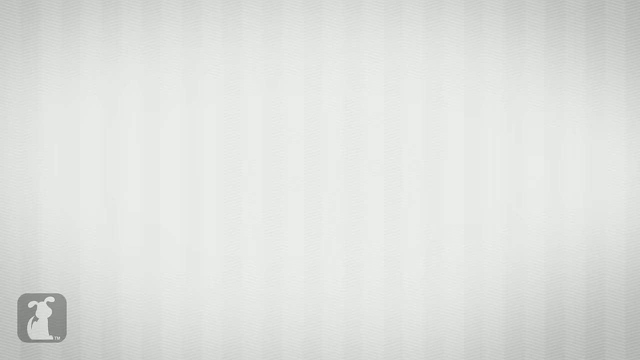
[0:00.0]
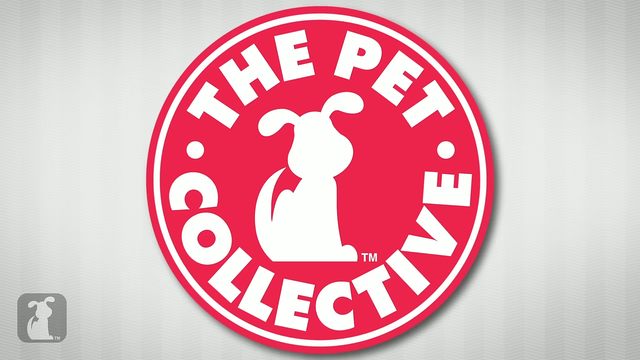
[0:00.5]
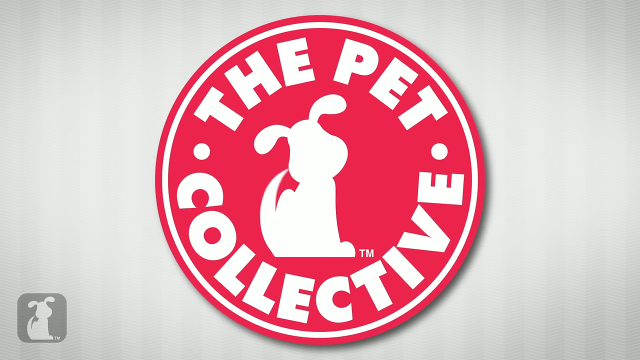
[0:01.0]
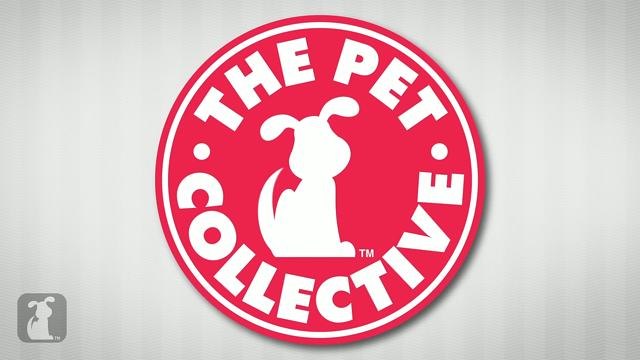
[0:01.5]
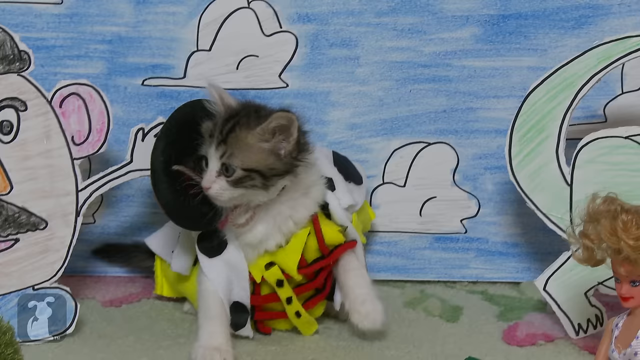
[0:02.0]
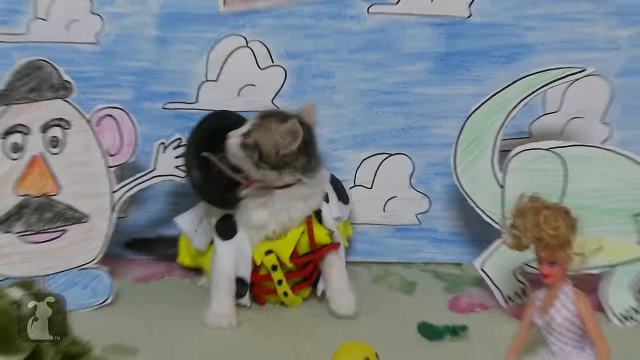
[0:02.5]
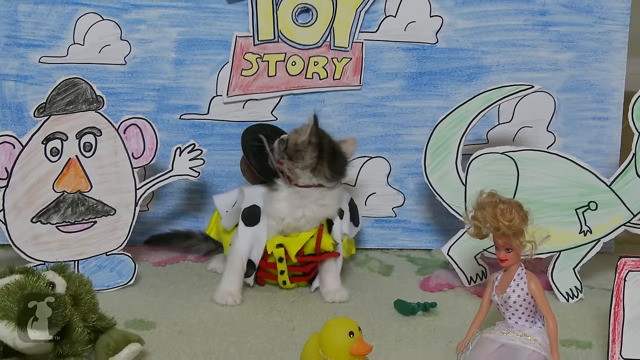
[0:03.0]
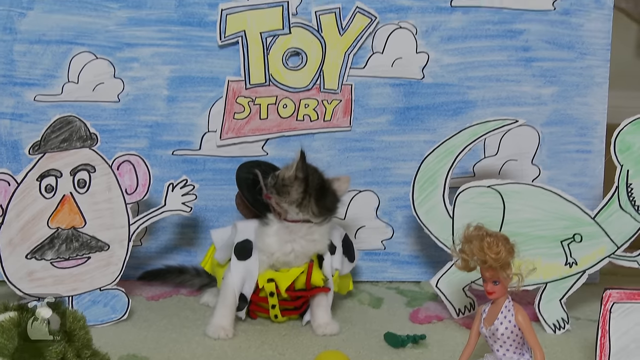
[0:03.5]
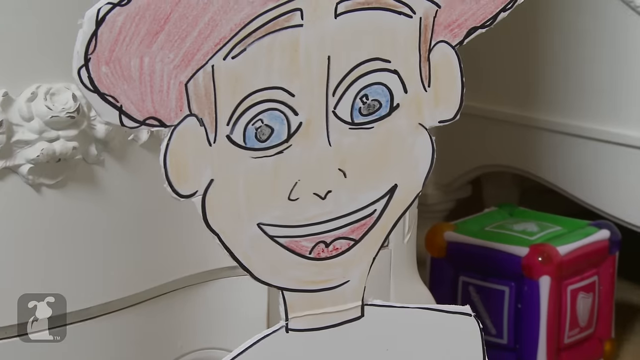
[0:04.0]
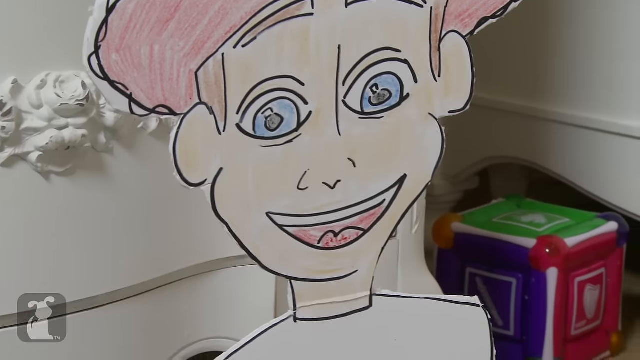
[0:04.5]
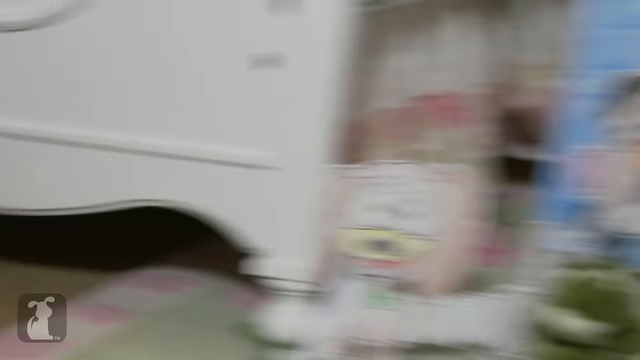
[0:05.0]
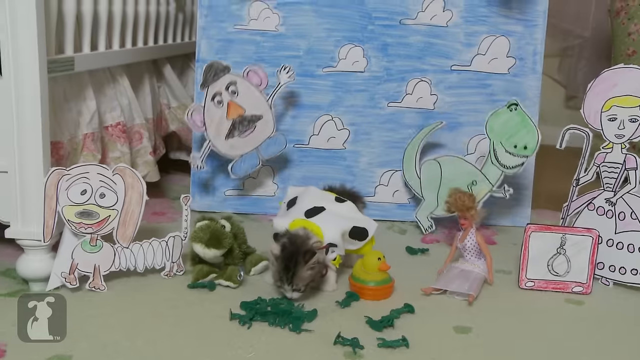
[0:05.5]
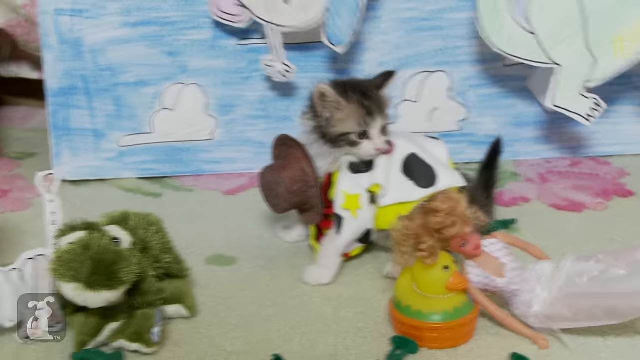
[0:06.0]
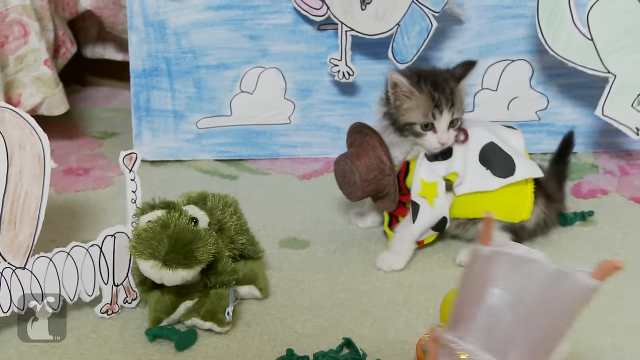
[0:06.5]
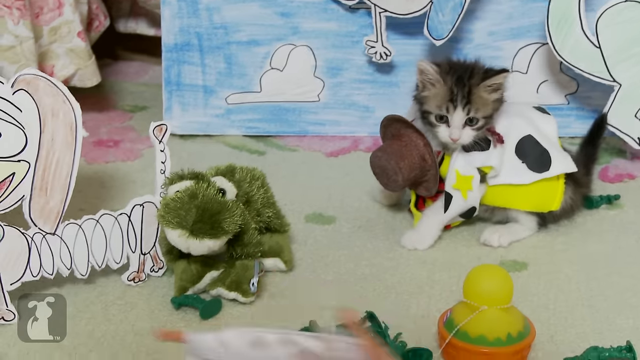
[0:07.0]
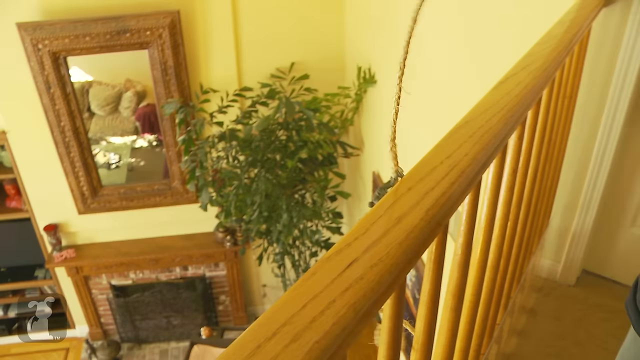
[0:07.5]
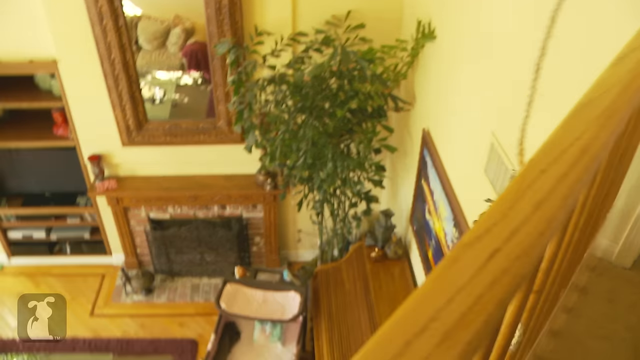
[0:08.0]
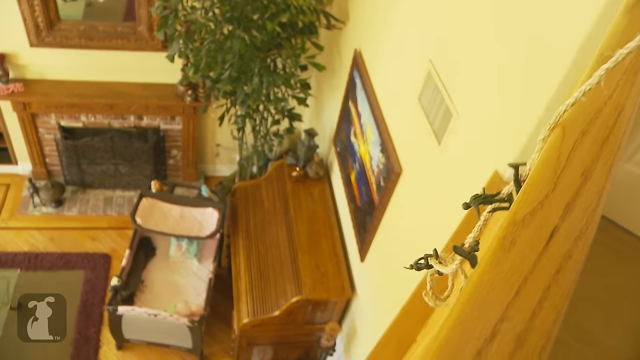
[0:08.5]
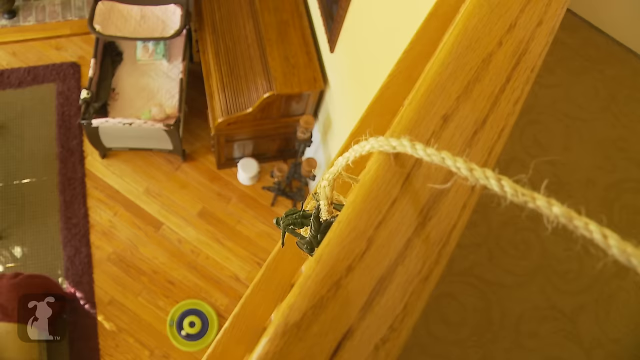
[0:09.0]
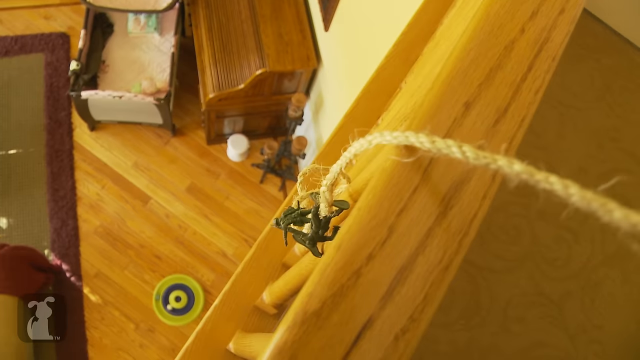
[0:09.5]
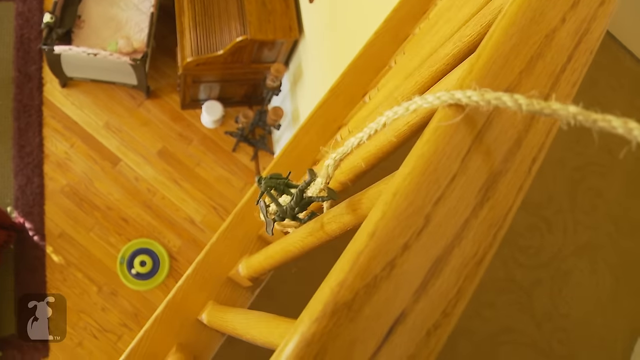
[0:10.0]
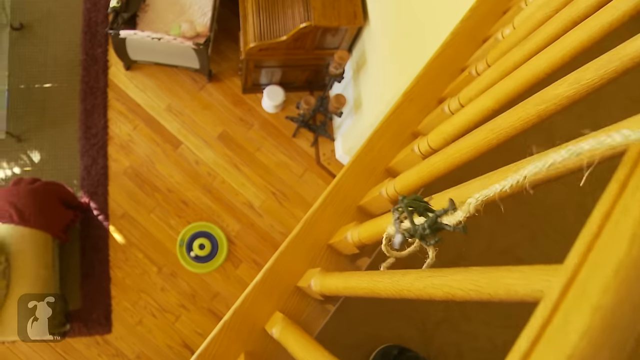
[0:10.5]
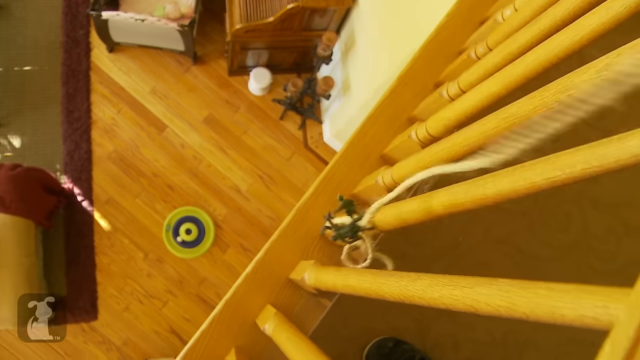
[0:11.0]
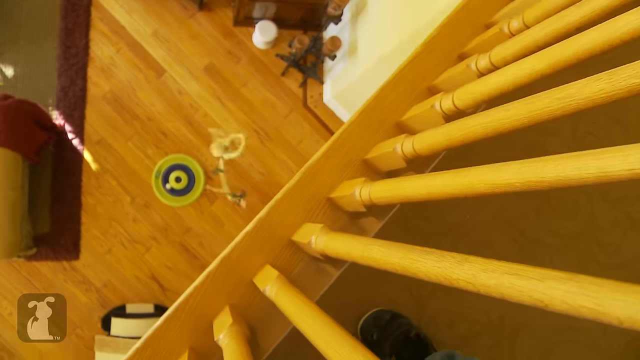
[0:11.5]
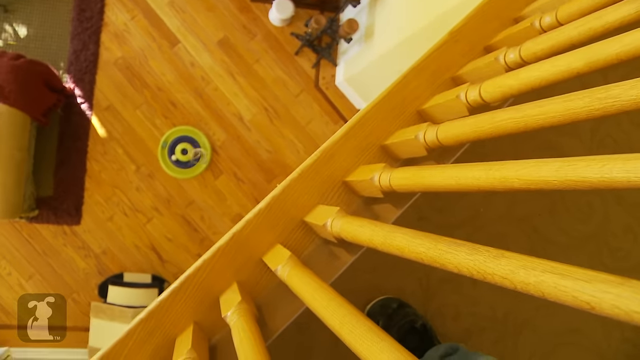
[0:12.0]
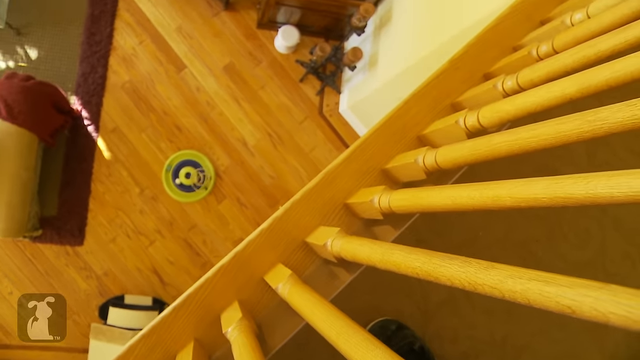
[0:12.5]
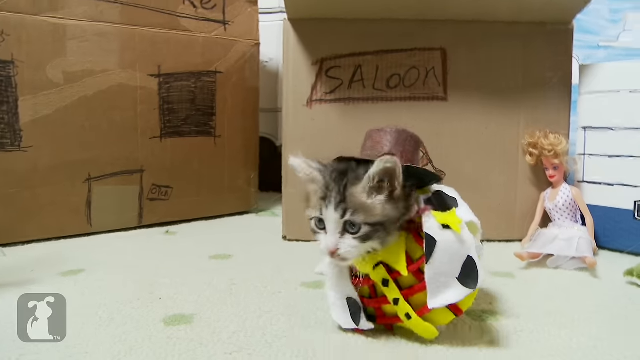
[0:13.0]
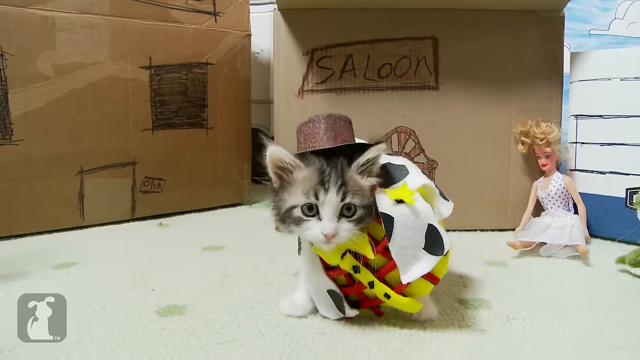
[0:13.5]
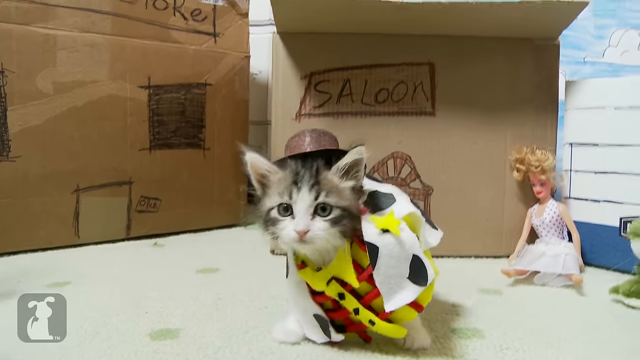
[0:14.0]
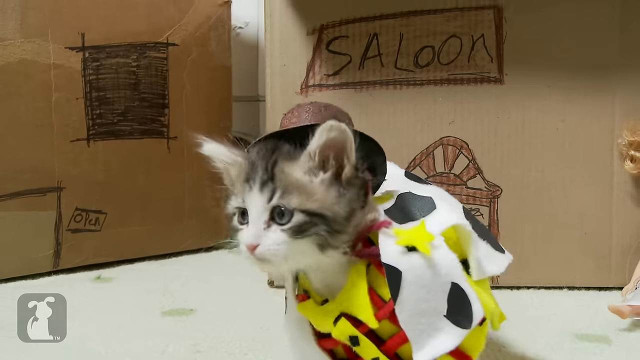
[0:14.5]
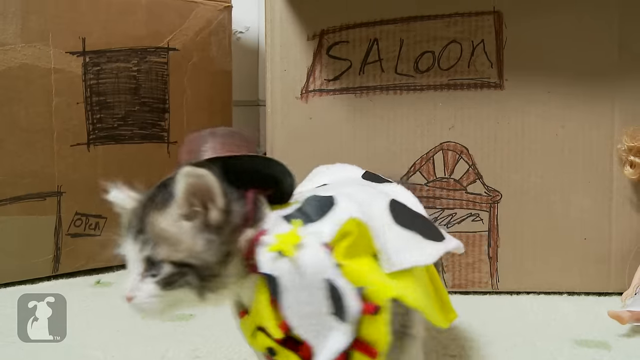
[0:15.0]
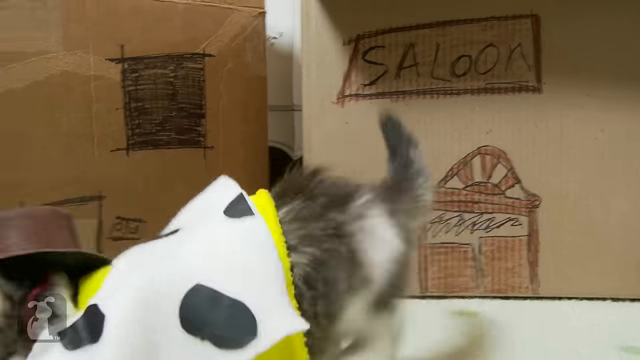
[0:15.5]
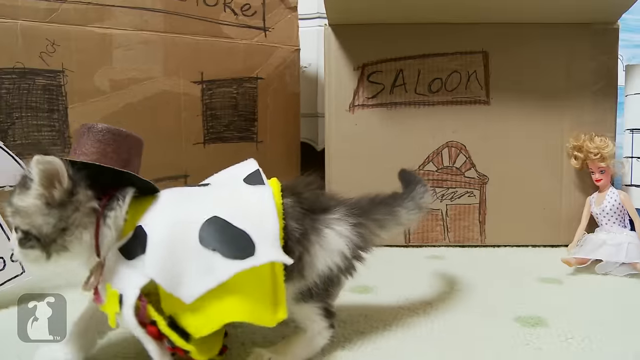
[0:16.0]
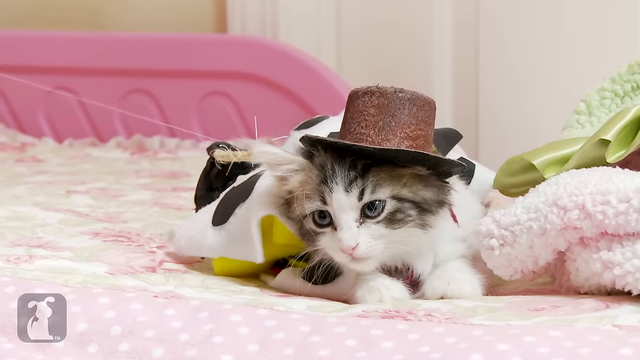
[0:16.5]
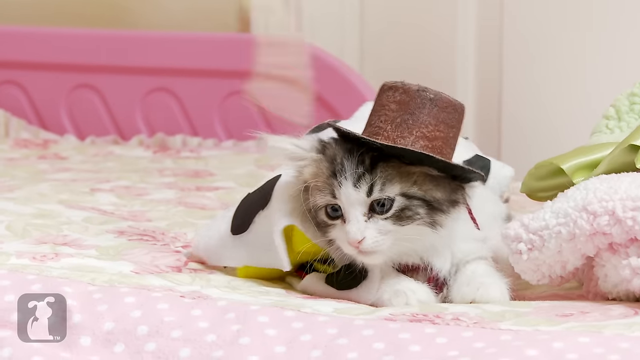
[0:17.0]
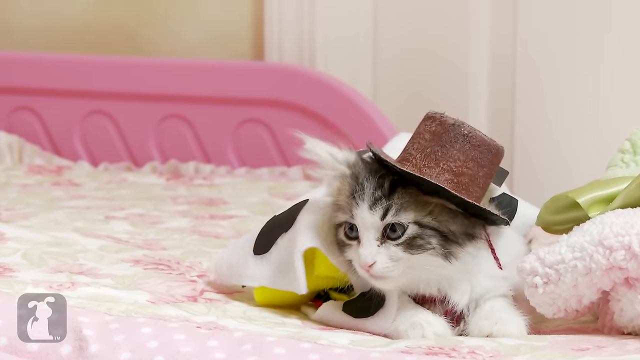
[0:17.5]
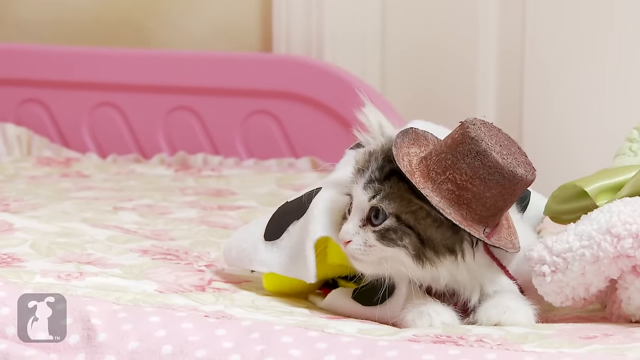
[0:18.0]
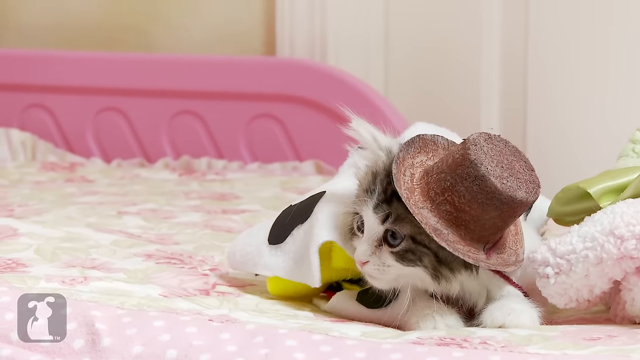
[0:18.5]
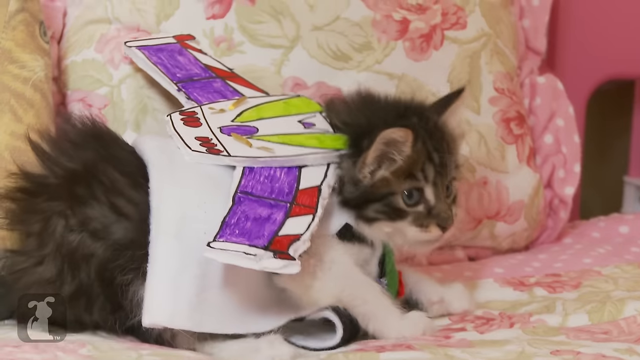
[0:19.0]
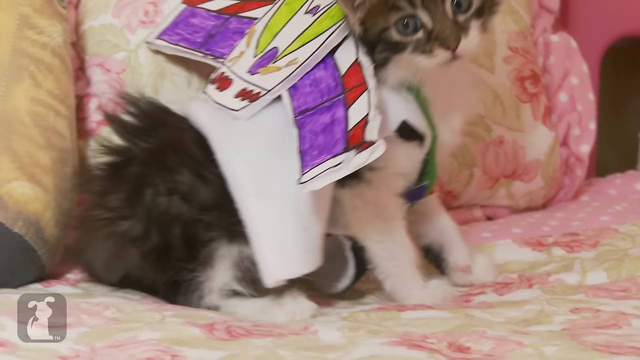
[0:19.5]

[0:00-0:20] A kitten appears to be cosplaying as a member of the Toy Story franchise. It is weighed down with various articles of clothing, and because the kitten is not very big, when it is startled by some moving cartoon cardboard figures behind it, it cannot move away very fast, though it does seem a little upset about it. Someone off screen pulls along a piece of string with some other plastic toys on it, likely from the Toy World franchise, to entice the kitten to play, but the kitten just seems very upset about having so many pieces of clothing on.